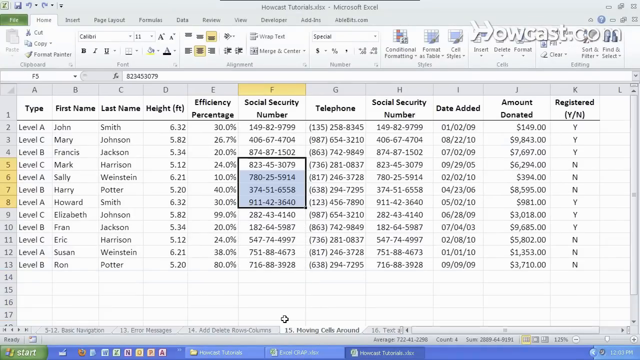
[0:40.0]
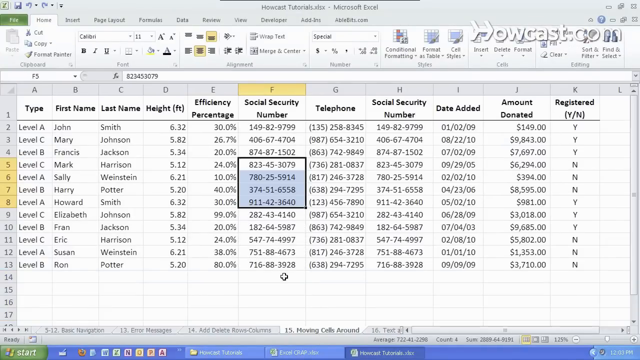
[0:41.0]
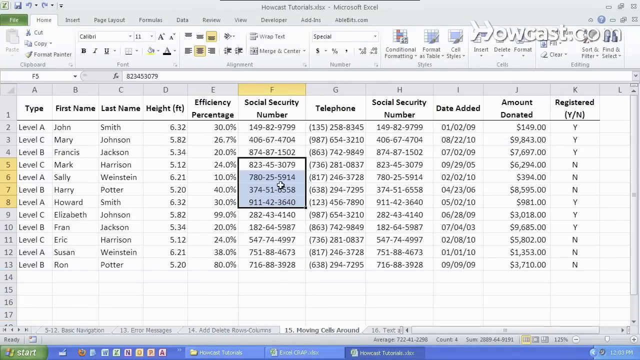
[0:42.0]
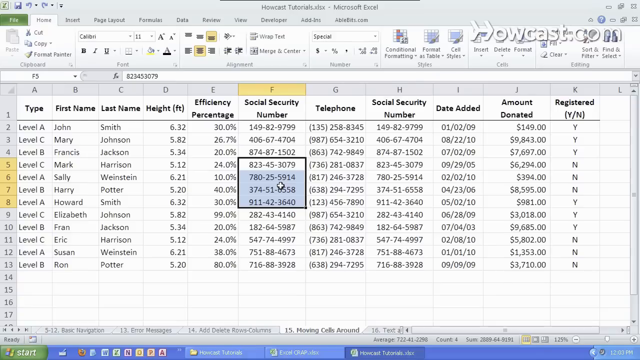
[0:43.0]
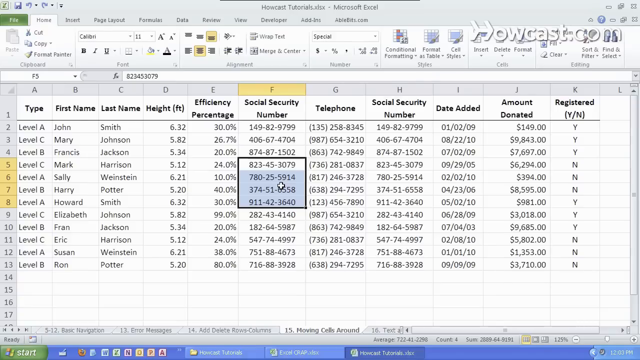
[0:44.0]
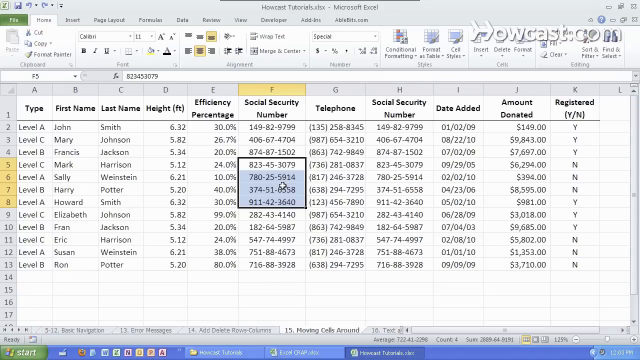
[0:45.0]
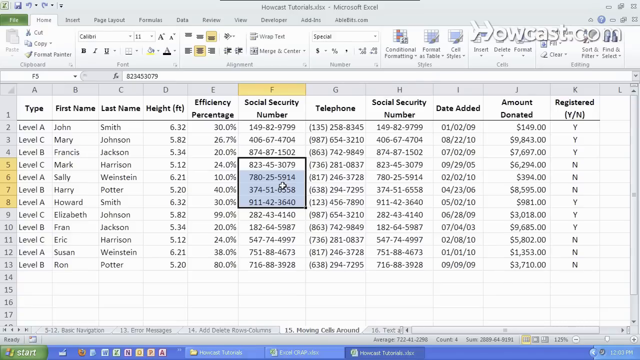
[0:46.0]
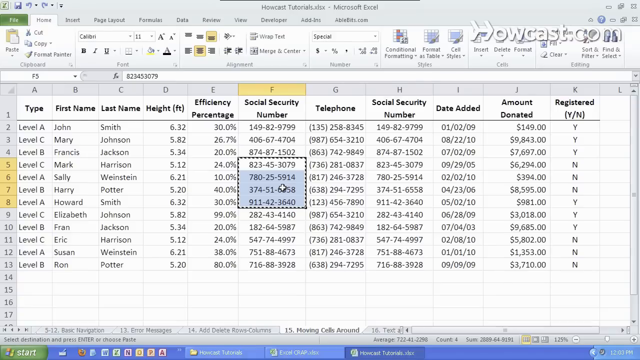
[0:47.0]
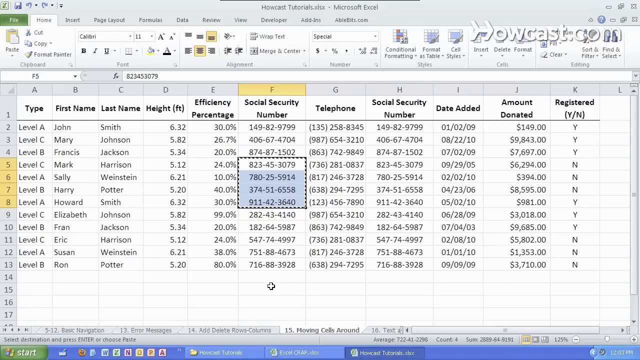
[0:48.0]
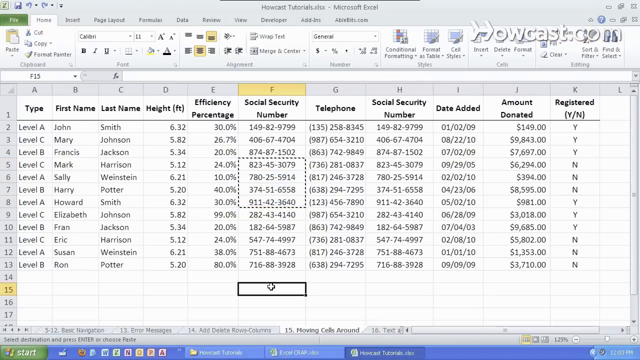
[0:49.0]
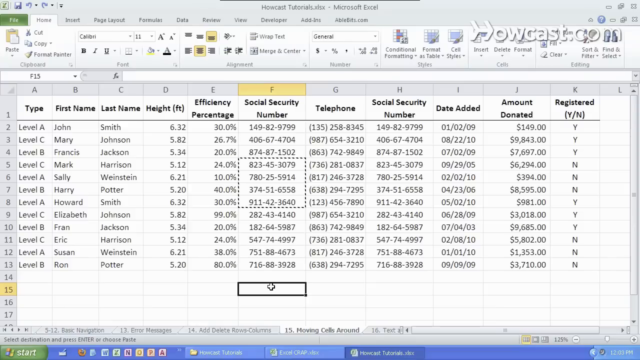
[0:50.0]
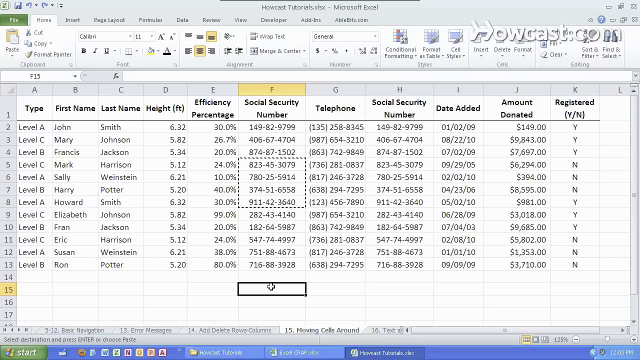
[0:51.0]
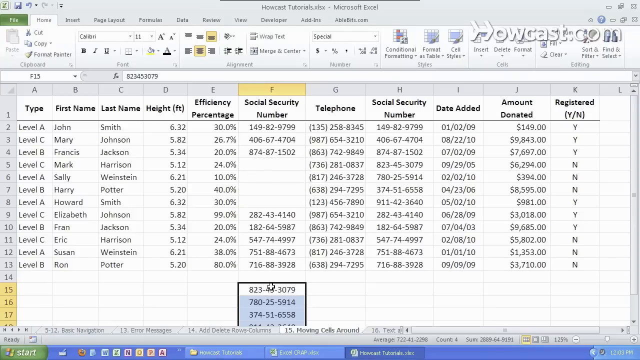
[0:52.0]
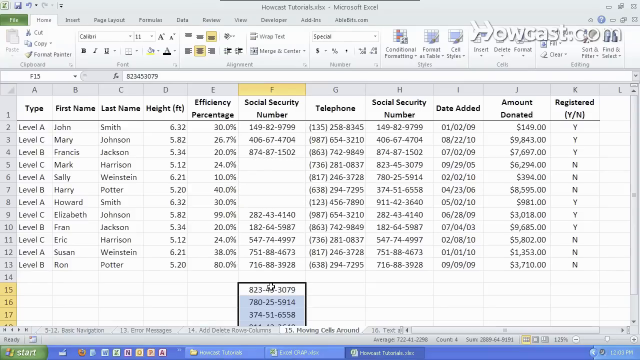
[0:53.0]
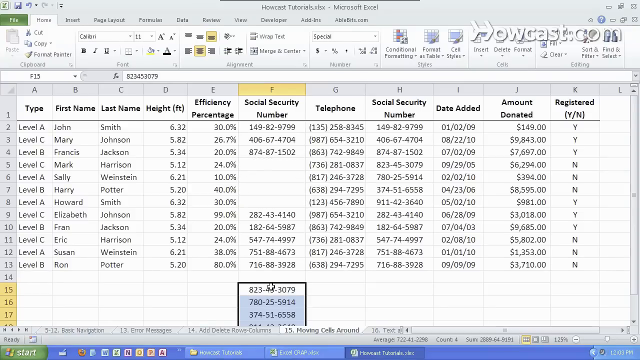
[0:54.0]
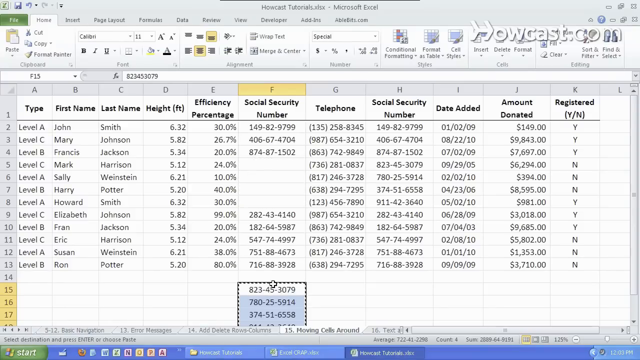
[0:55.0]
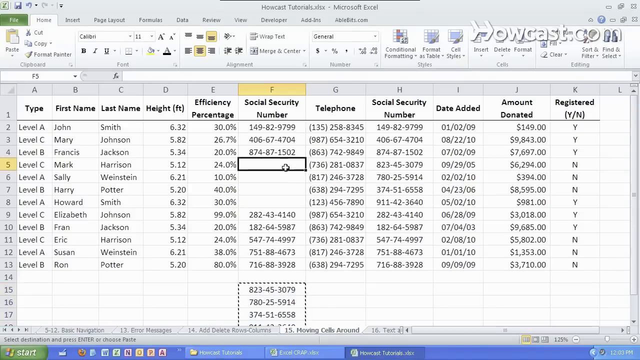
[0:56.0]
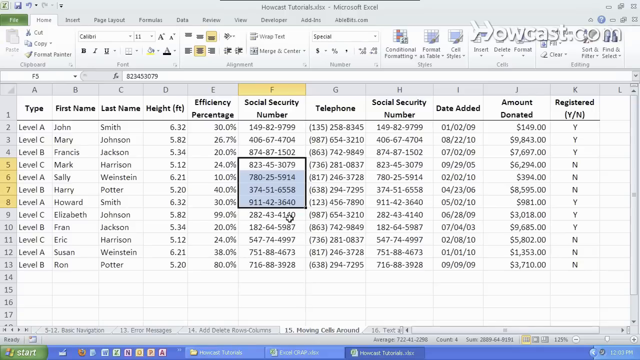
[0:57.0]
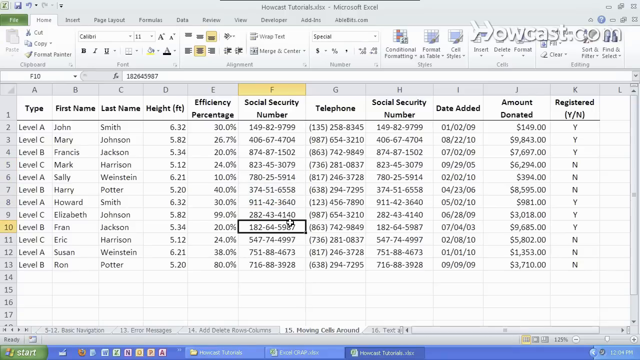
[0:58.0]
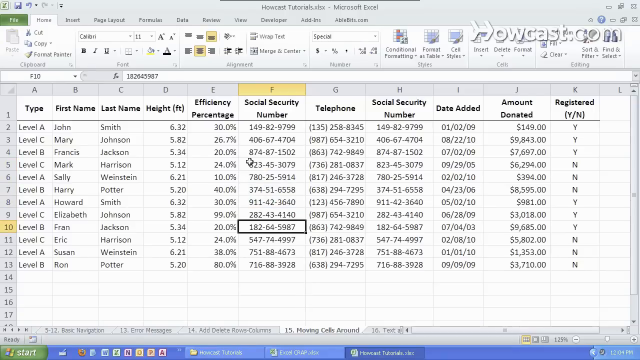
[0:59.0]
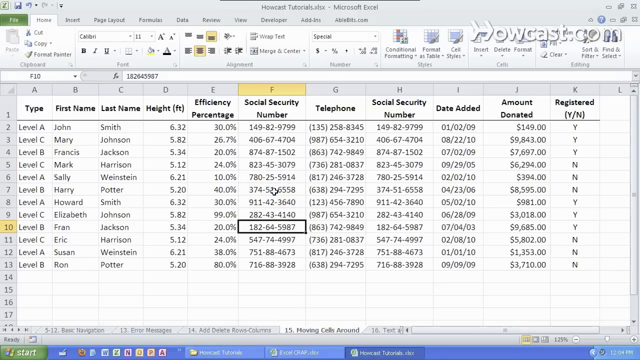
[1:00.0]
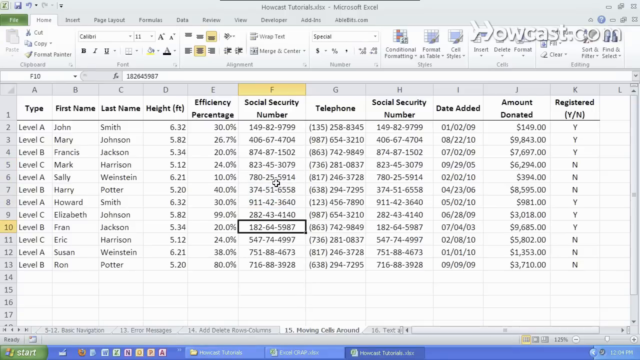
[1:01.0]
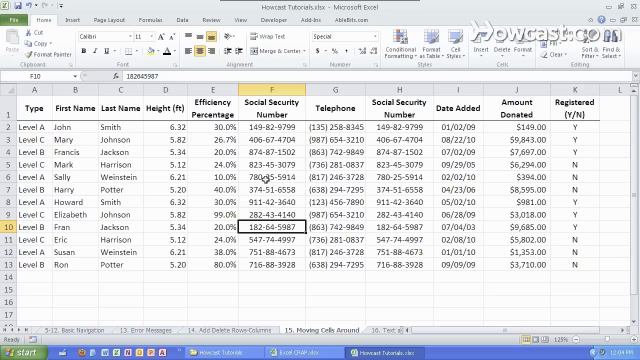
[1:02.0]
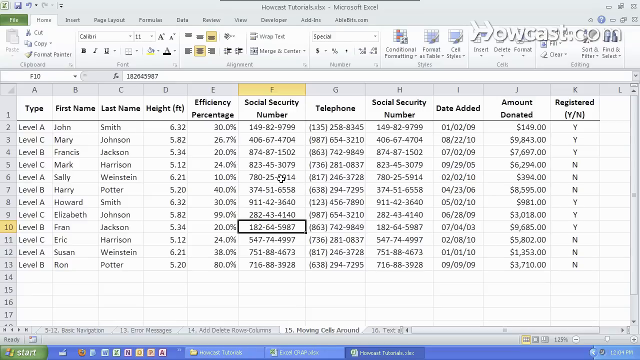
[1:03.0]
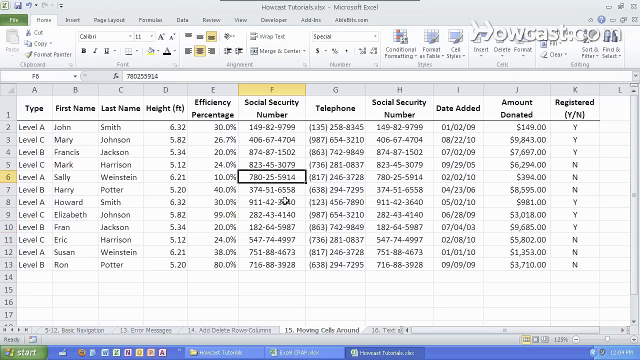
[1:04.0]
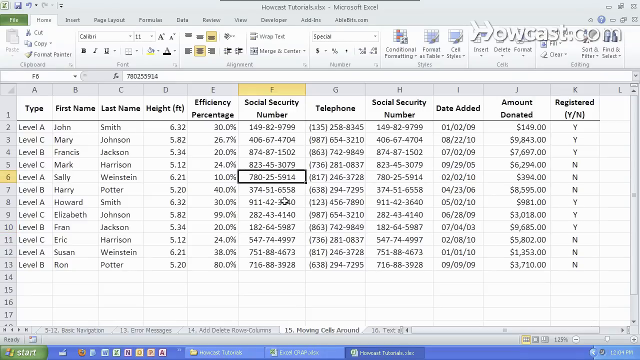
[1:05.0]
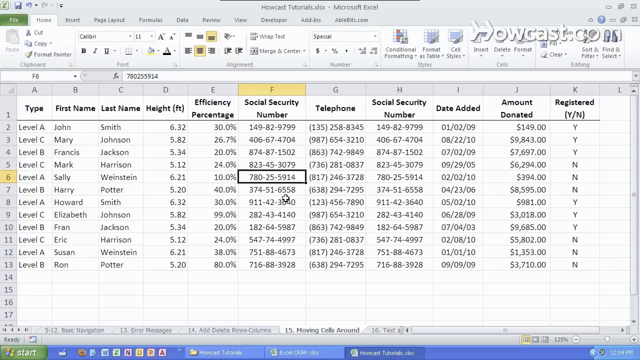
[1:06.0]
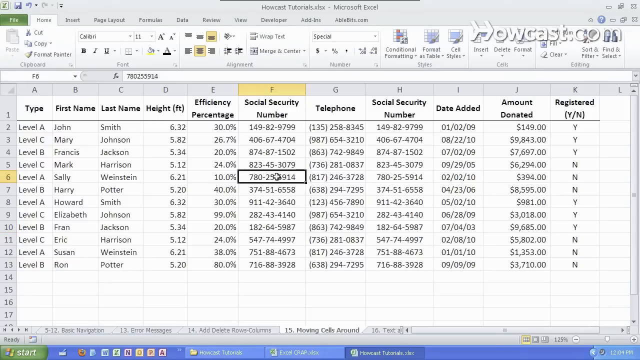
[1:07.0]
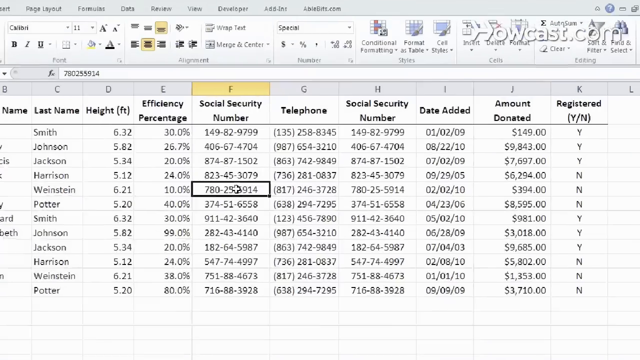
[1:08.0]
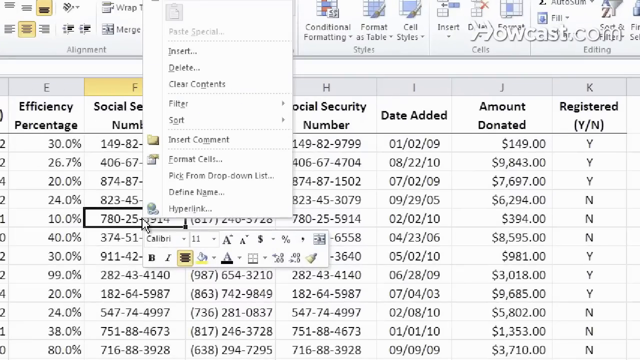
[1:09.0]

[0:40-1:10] The man puts the four social security numbers back where they were before, then highlights them, cuts them and puts them down again. He hovers over more social security numbers, zooms the camera in, right-clicks on one cell and hovers over the insert option. The video is low quality and a little blurry. It looks like he is going to use the insert option to add something new. He hovers over the social security numbers again, right-clicks and presses insert while the different categories are visible: telephone number, social security number, date added, amount donated, and registered, yes or no. He appears to have multiple Excel spreadsheets open, though the other one is not shown.